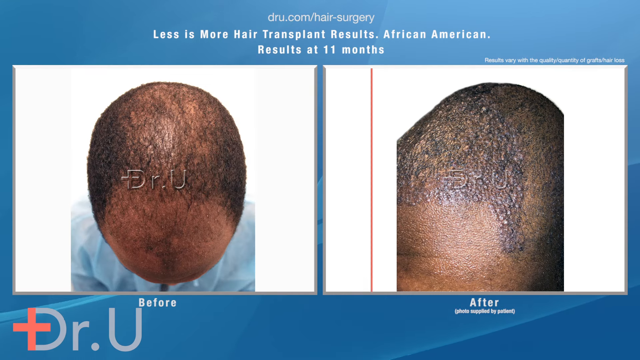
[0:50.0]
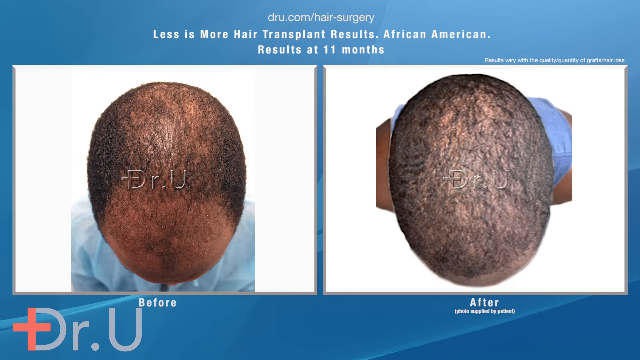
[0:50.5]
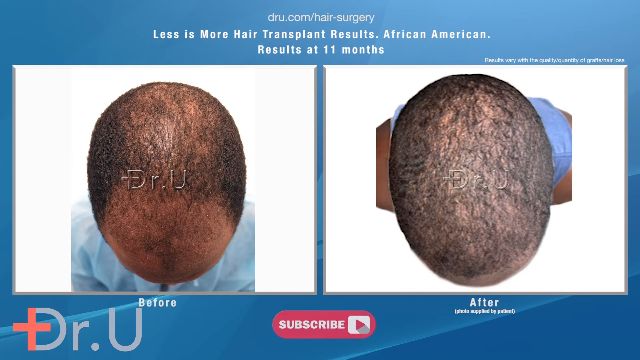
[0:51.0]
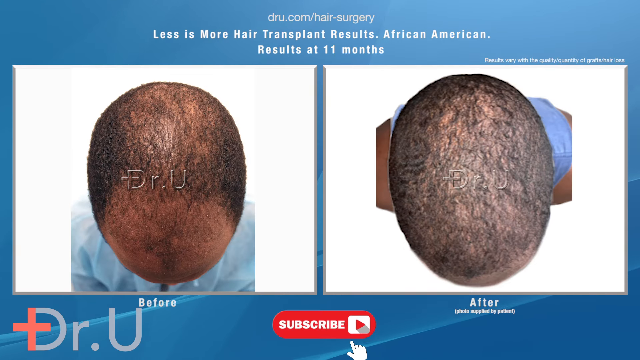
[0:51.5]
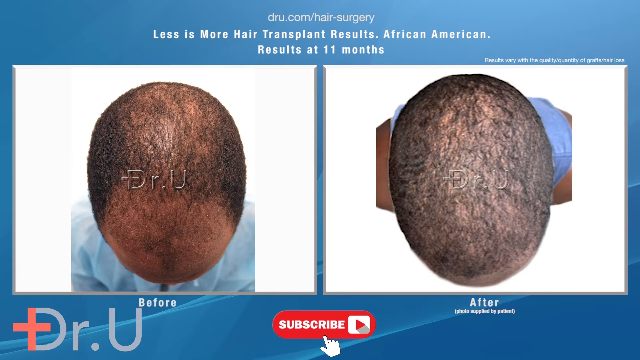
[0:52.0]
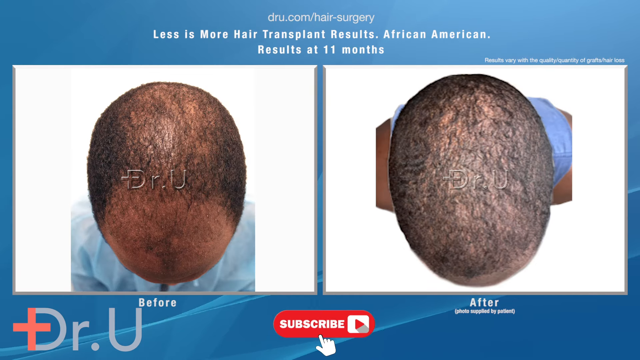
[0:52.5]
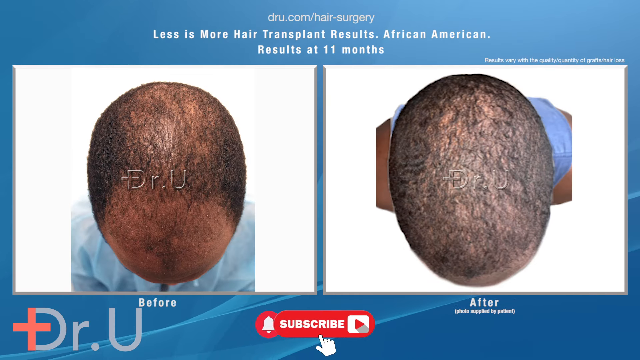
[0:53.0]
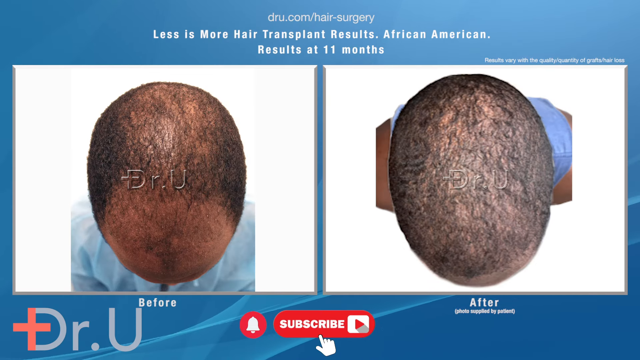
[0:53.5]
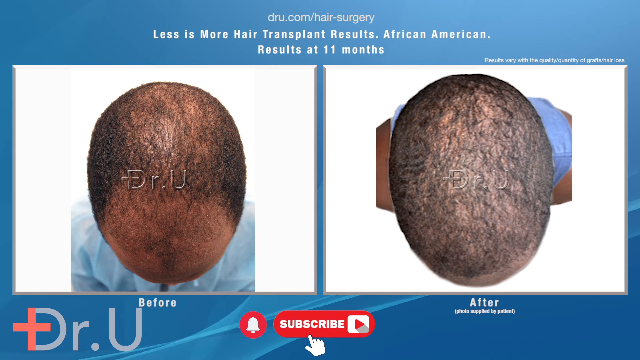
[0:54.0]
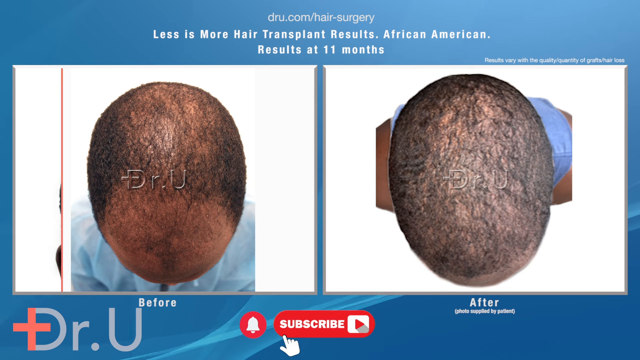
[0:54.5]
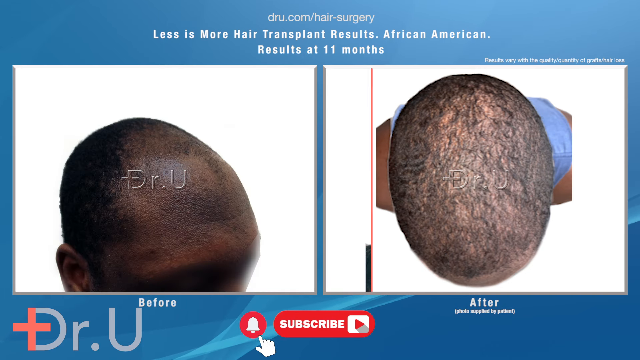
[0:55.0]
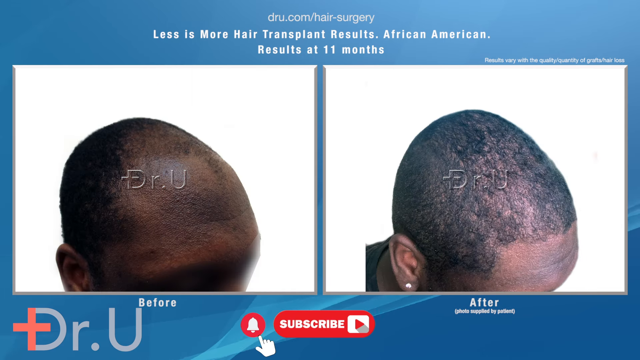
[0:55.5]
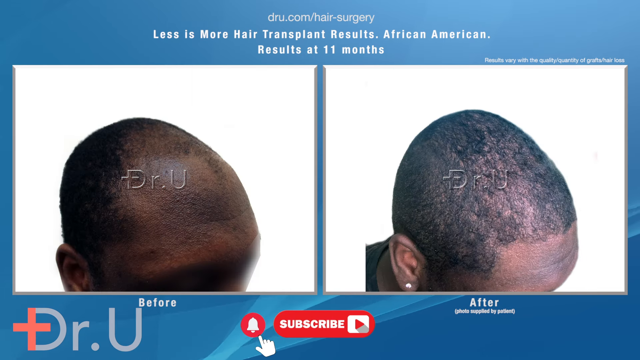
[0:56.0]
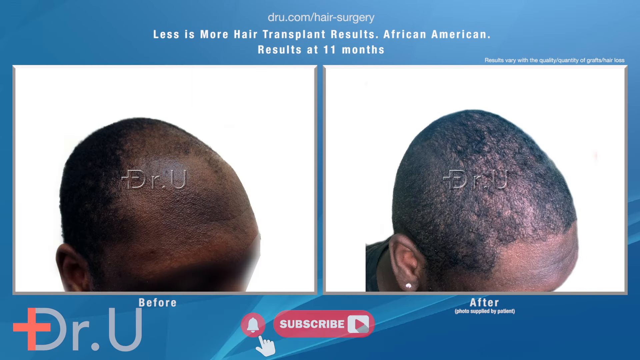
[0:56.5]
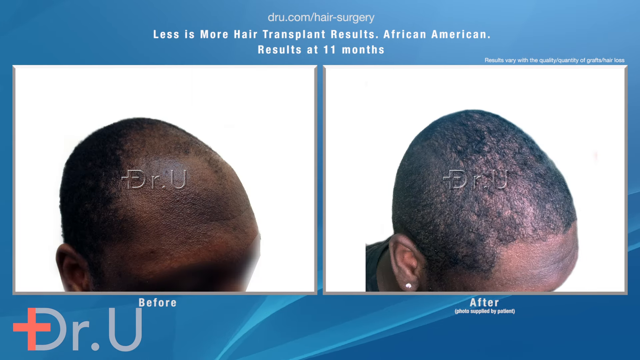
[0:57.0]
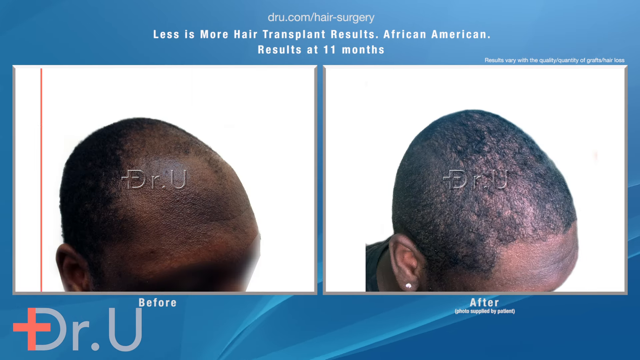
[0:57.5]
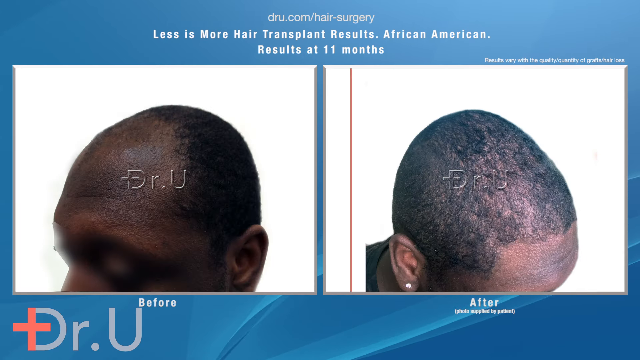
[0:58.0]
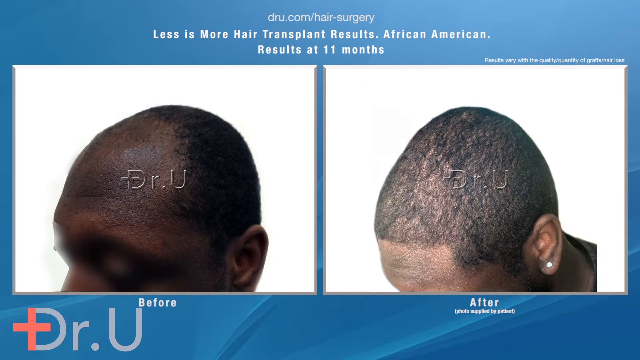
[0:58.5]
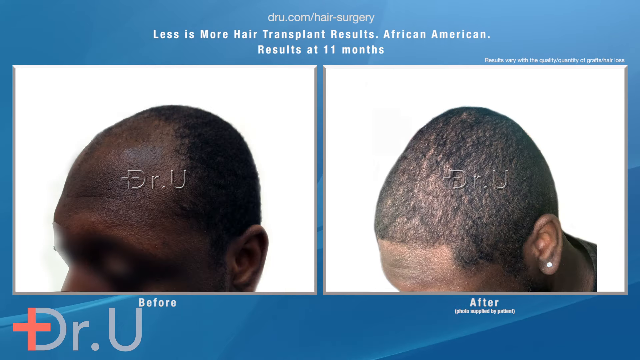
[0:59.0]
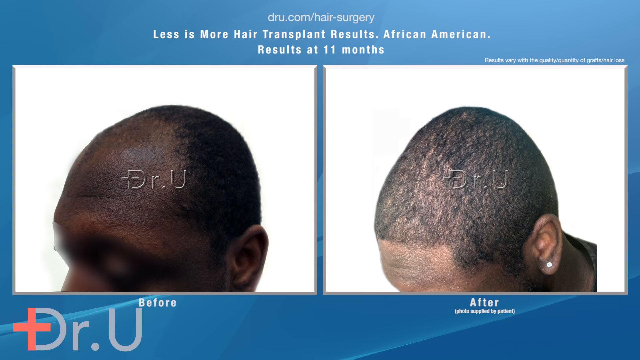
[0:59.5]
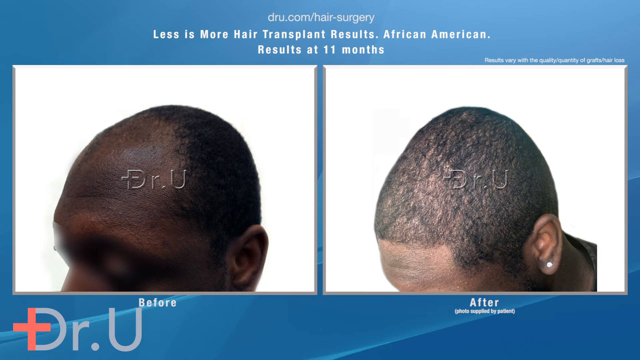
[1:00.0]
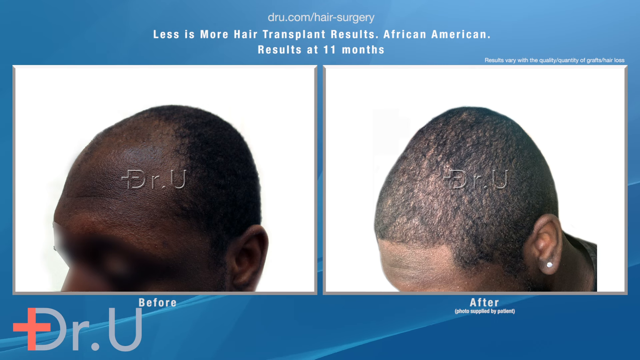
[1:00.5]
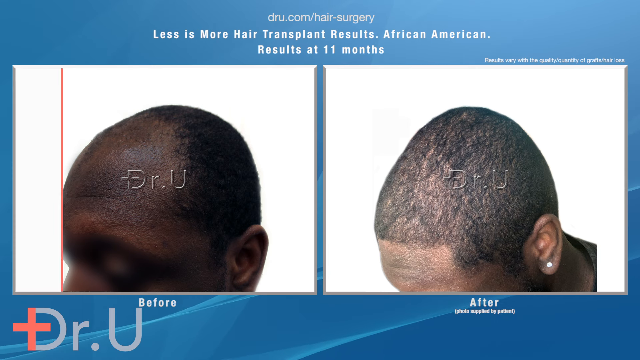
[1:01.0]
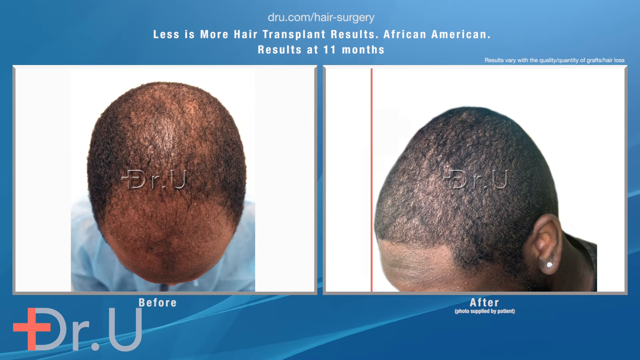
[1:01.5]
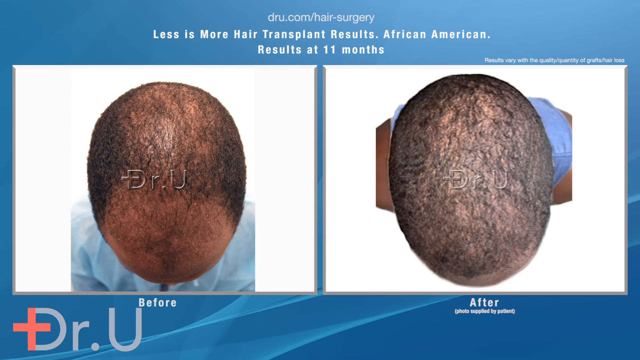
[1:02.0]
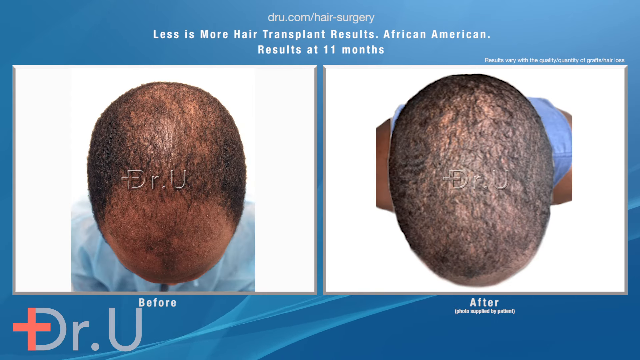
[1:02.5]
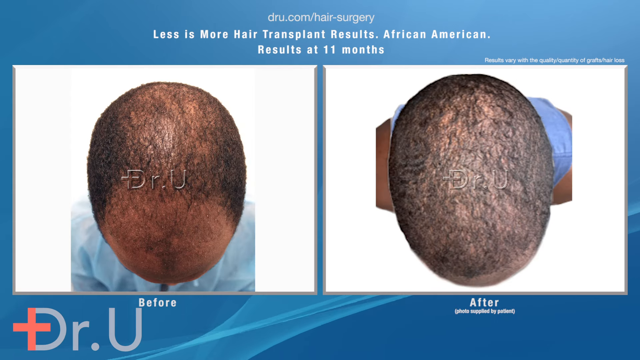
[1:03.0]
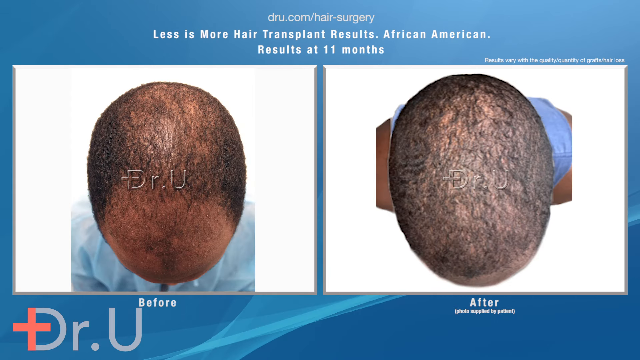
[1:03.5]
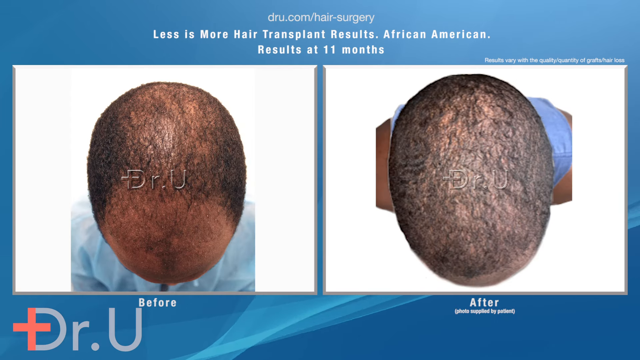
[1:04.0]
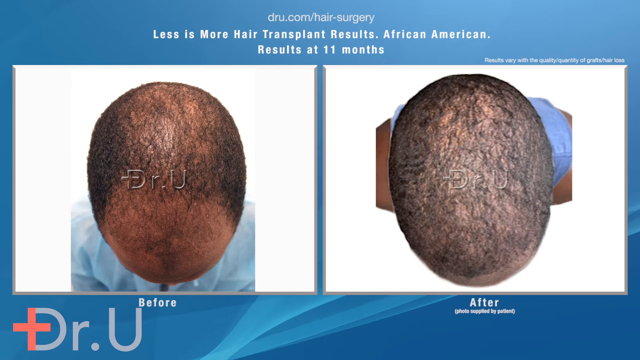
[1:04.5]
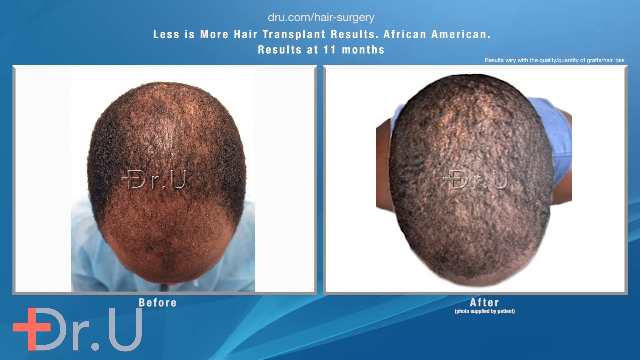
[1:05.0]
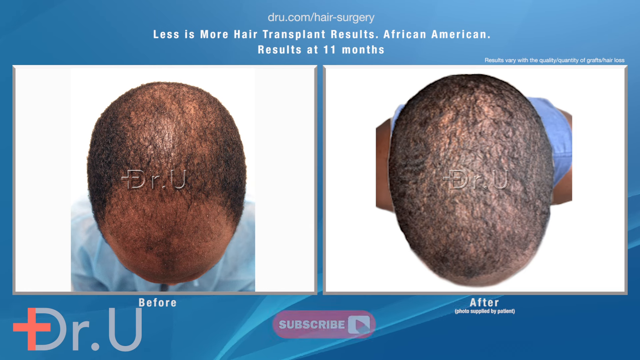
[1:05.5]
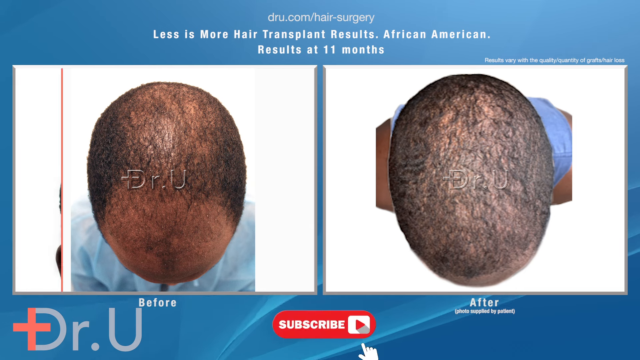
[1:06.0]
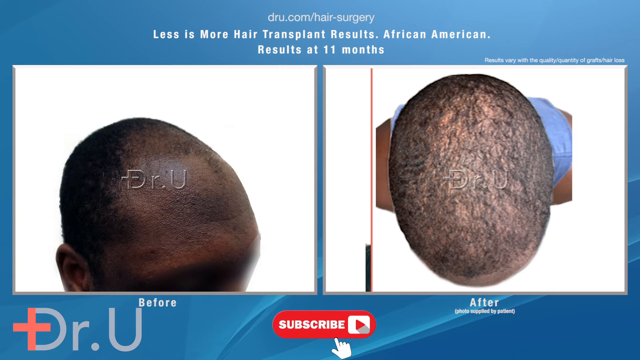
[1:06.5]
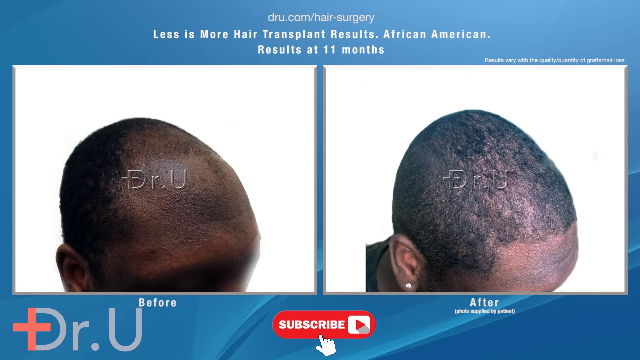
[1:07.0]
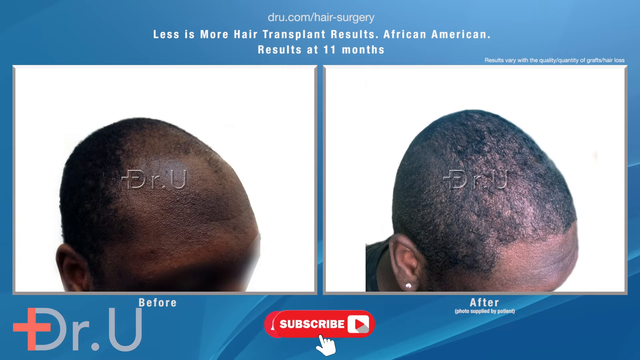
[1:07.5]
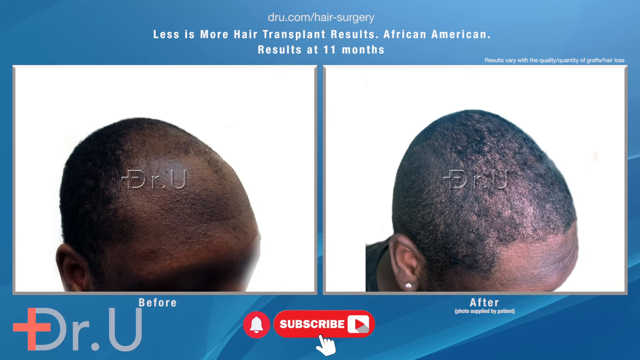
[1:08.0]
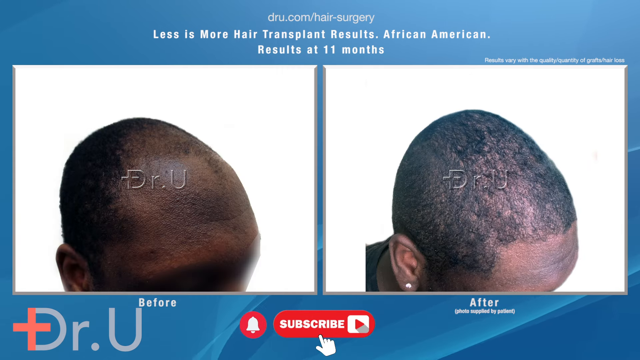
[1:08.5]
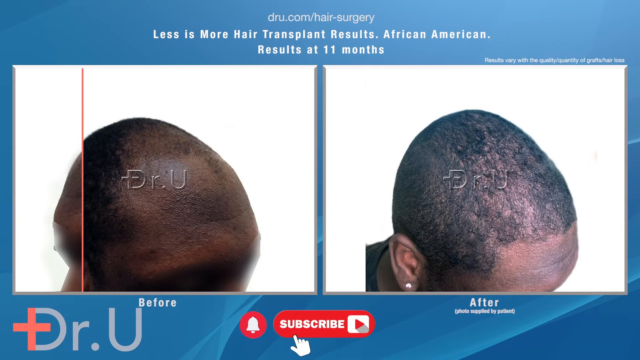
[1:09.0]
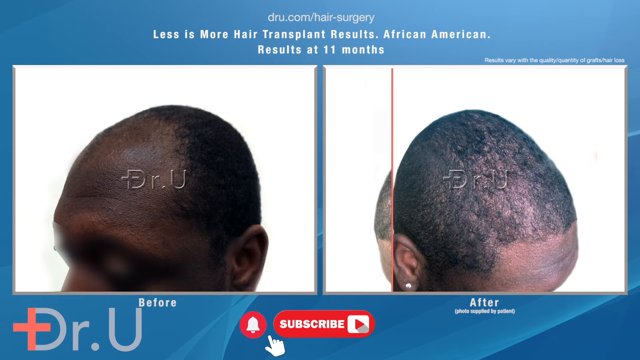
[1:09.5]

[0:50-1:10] A series of side-by-side before and after photos from a hair transplant appears on a blue background, with two inset photos: under one it says "before" and under the other it says "after." The photographs show a man with baldness on the left and improvements to the same area of his scalp on the right, each set taken from the same angle so the changes in hair growth are visible. Text above the two photos reads "dru.com/hair-surgery, Less is More Hair Transplant Results. African-American. Results at 11 months." In the lower left corner of the screen is a logo for the company presenting the video, Dr. U. Below the photos, a subscribe button appears, followed by a notification bell.